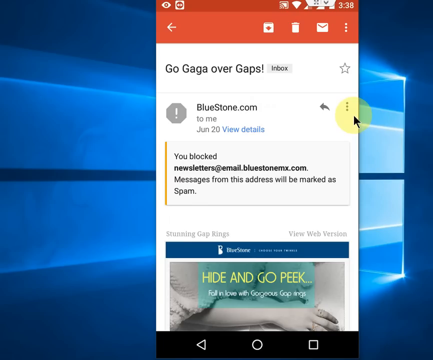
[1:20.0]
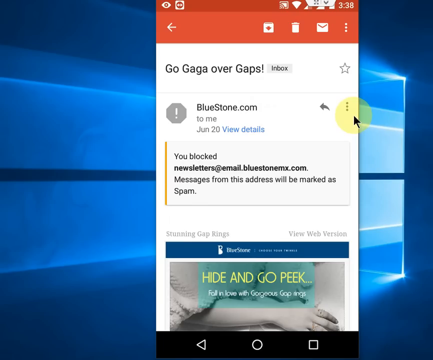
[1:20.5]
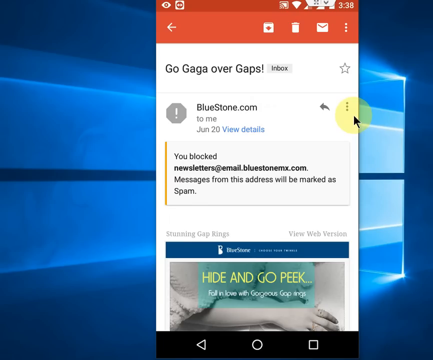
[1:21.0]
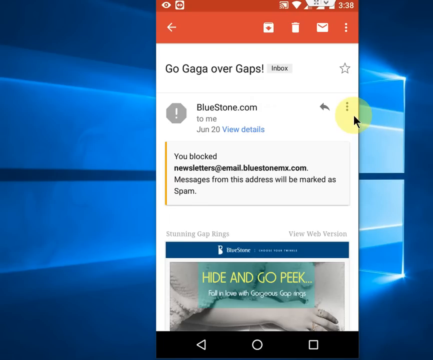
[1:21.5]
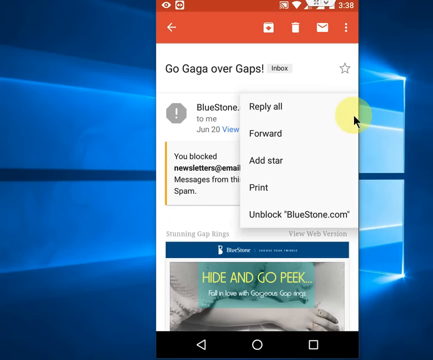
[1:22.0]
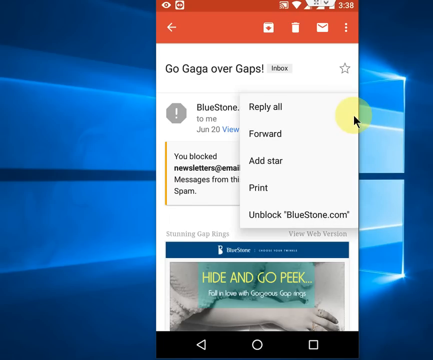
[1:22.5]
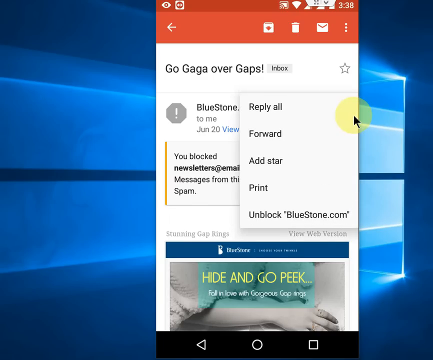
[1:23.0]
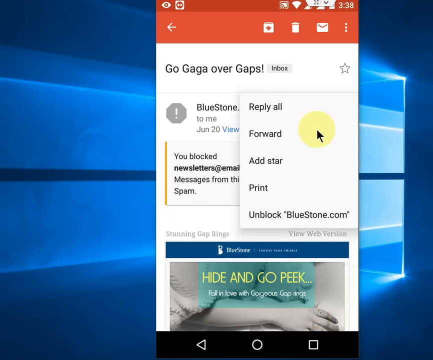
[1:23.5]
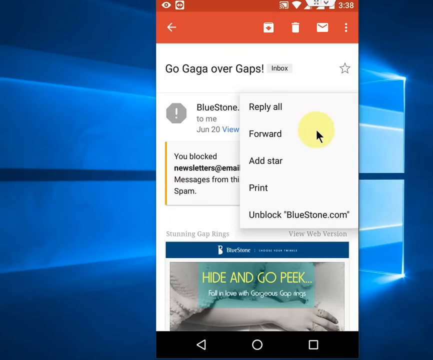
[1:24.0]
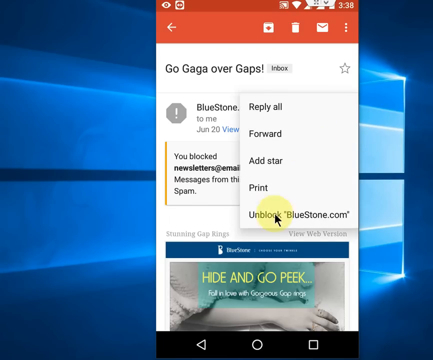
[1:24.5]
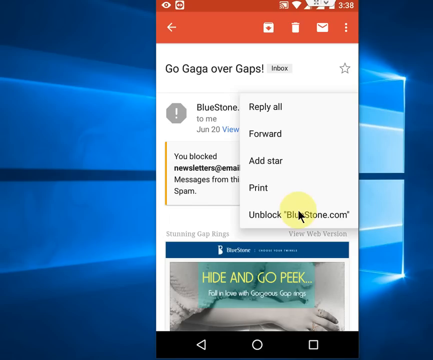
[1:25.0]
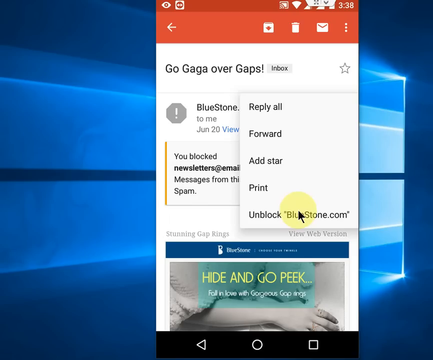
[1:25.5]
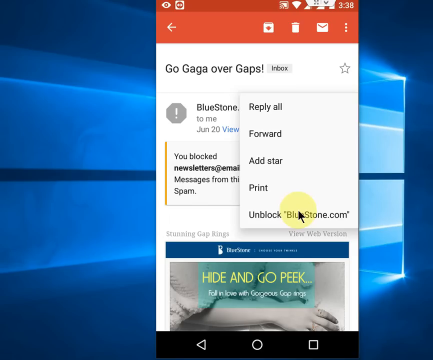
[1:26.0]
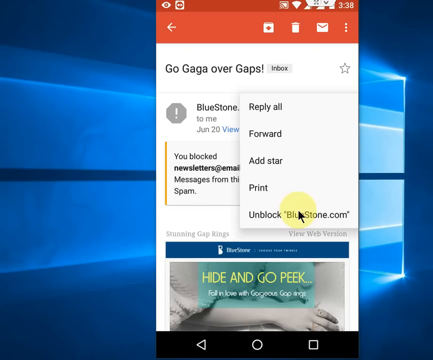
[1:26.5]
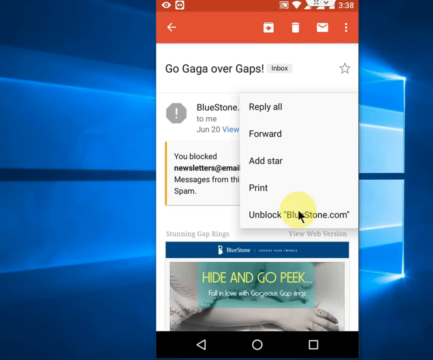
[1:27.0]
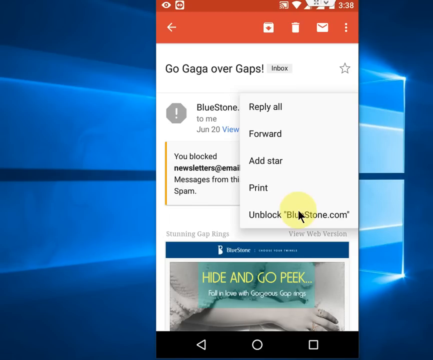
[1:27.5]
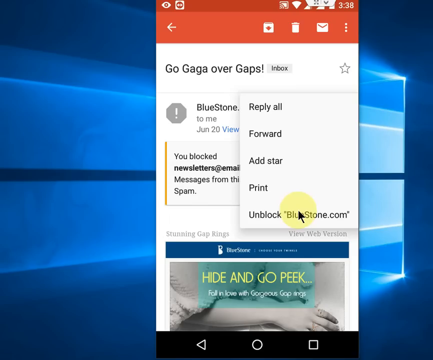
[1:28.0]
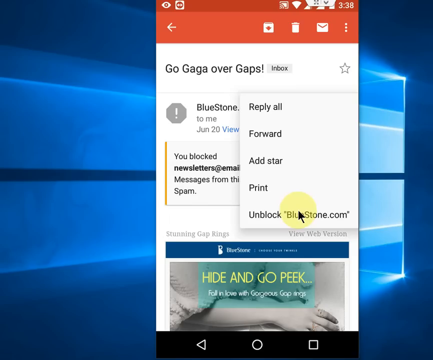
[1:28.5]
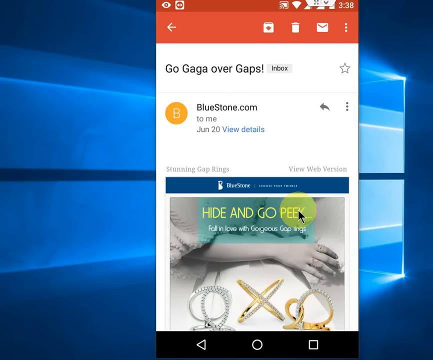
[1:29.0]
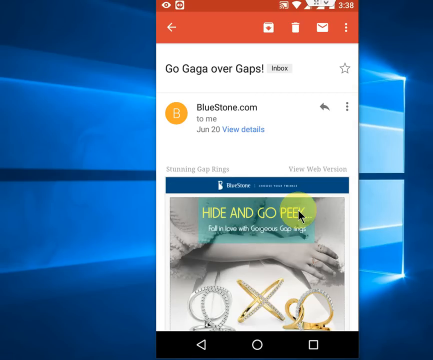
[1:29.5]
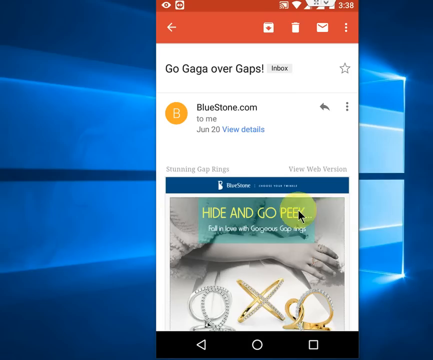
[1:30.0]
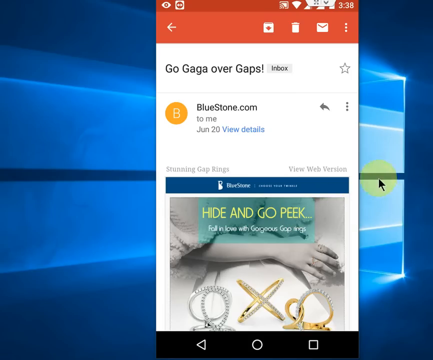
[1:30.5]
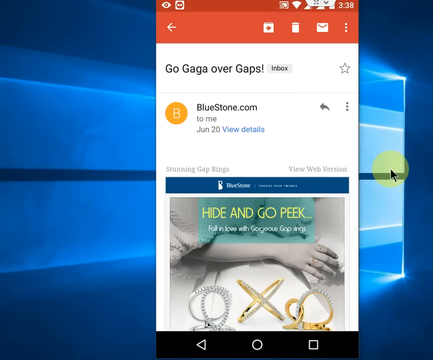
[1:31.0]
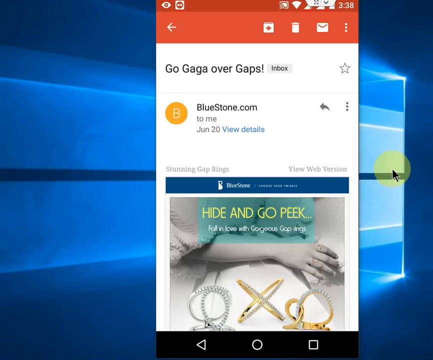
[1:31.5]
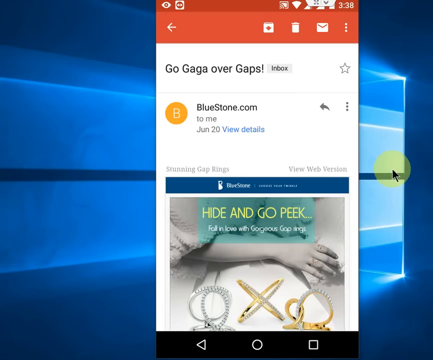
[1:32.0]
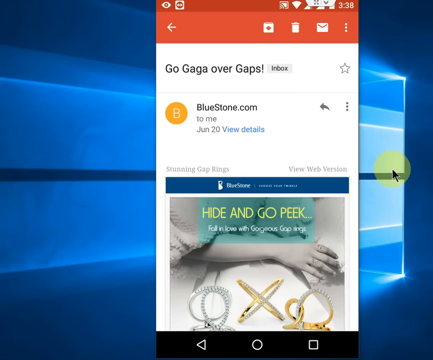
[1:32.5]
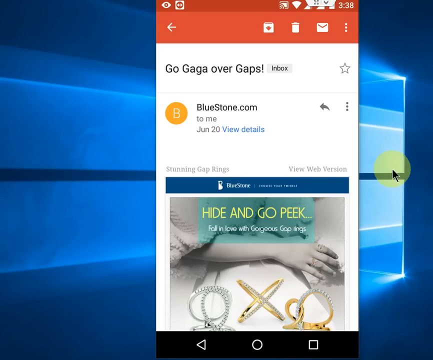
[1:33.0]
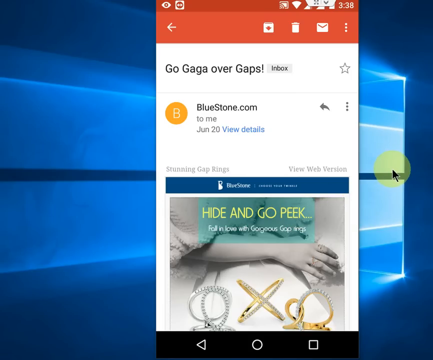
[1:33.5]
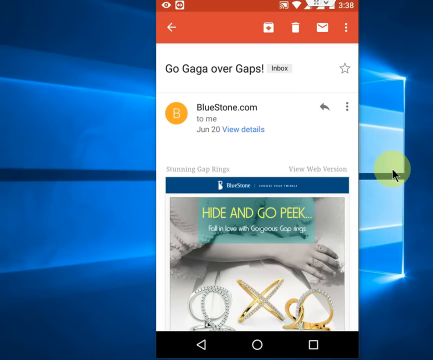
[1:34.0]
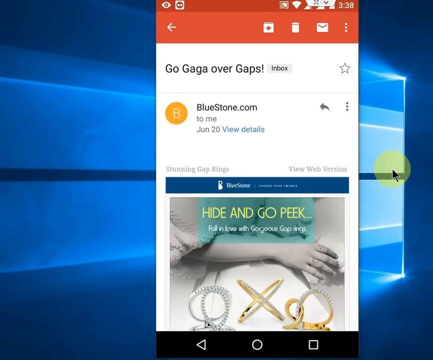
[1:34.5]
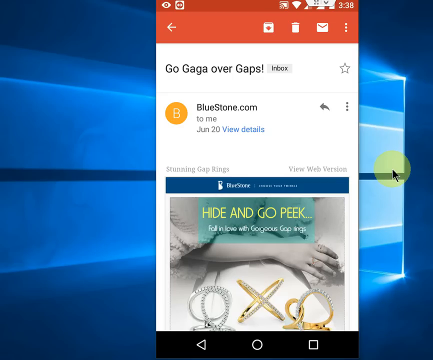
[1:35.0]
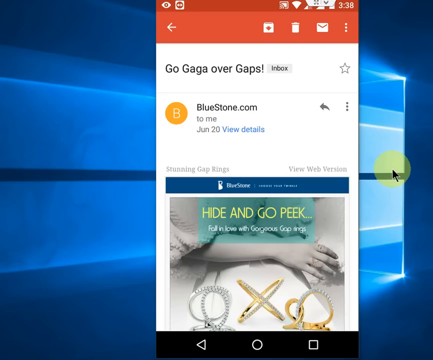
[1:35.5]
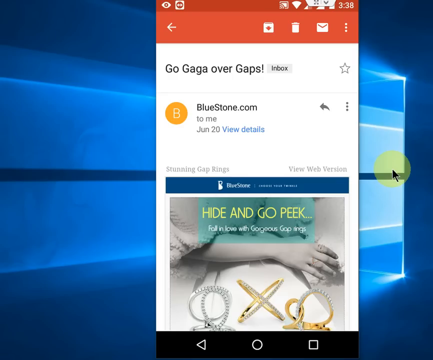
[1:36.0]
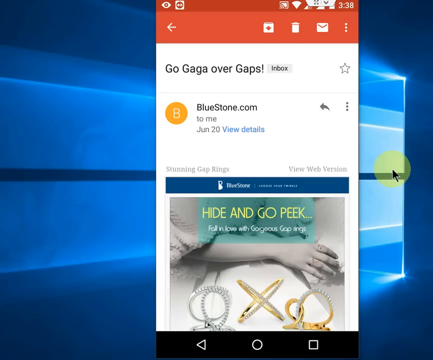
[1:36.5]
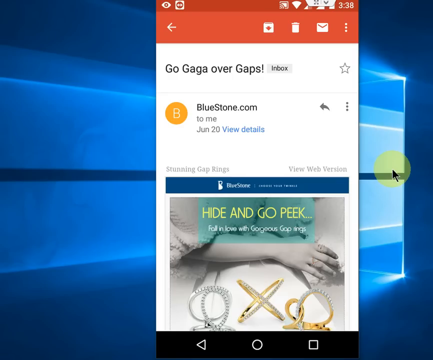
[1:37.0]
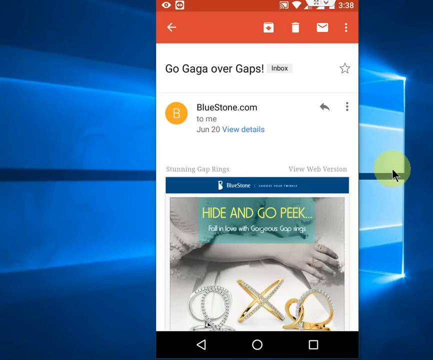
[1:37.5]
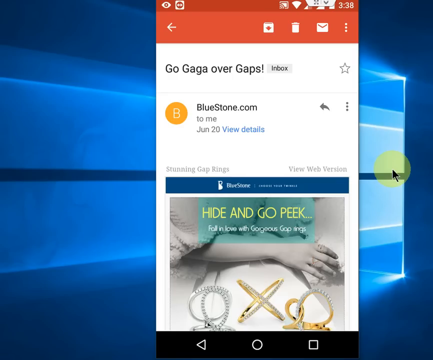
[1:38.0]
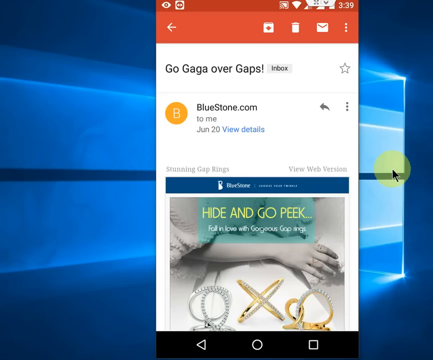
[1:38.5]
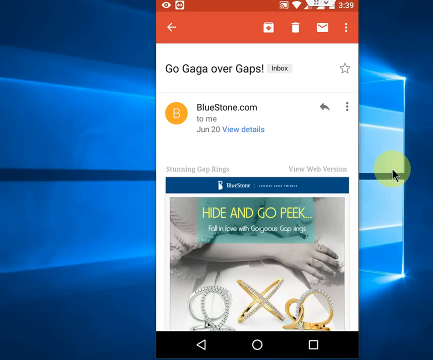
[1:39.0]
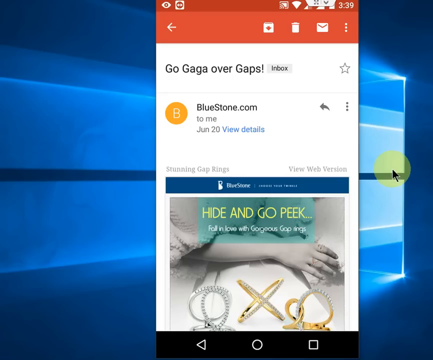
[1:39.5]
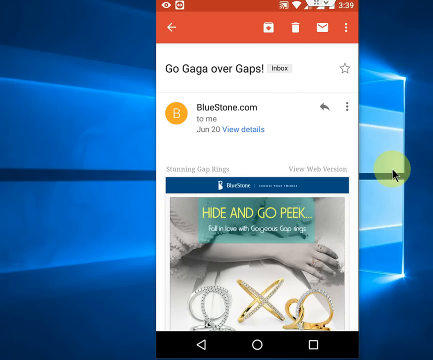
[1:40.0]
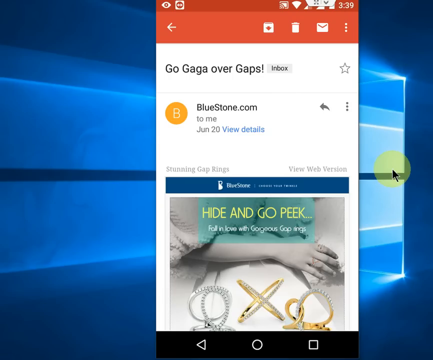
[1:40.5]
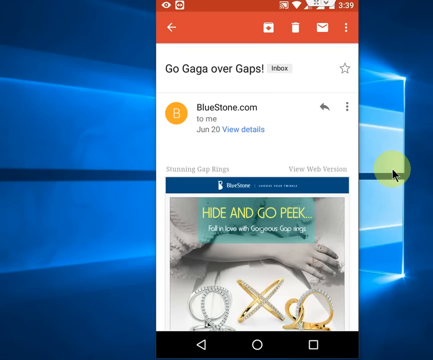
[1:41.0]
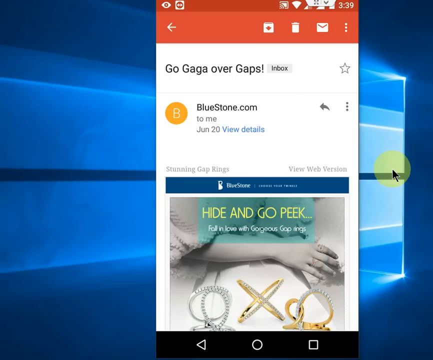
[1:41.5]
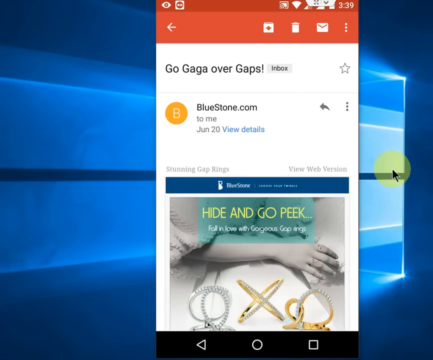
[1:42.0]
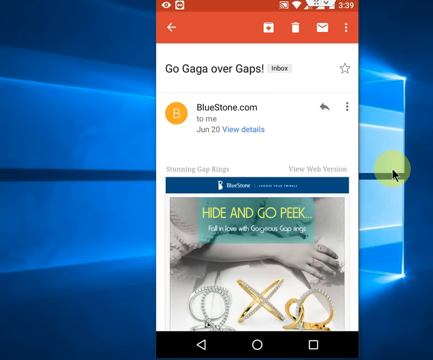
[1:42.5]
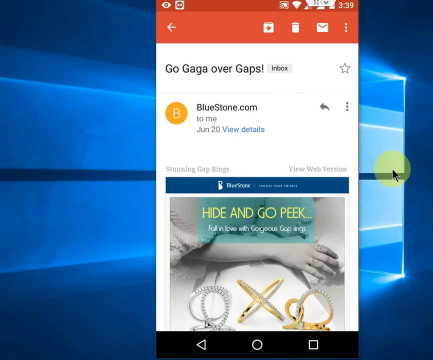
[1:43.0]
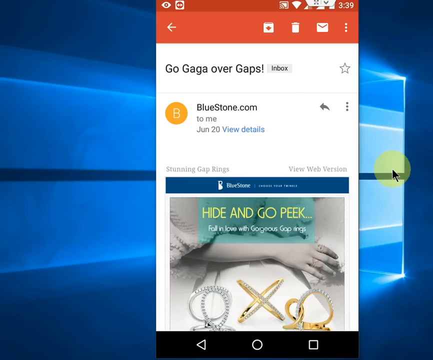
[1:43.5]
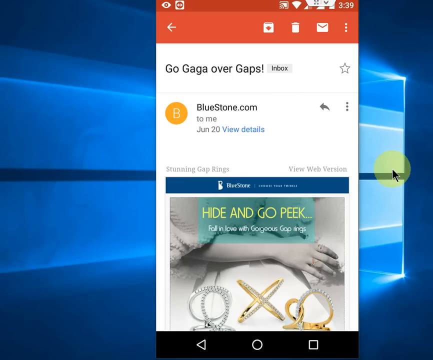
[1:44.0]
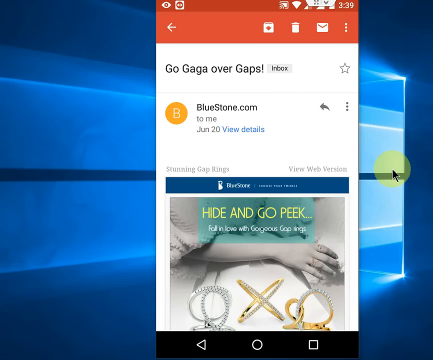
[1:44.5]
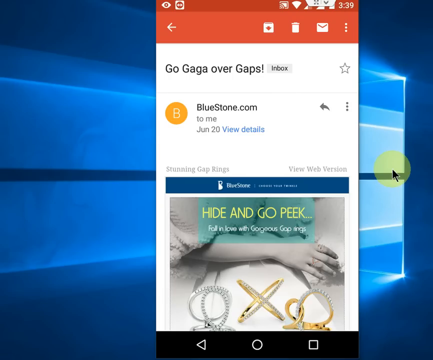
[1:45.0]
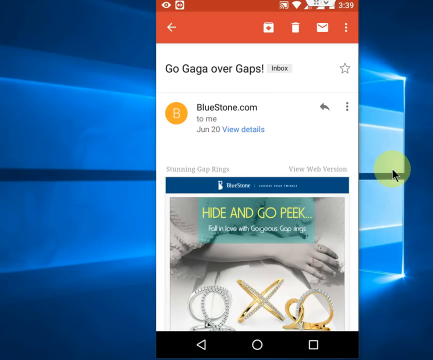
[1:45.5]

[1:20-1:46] The same "go gaga for gaps" email from bluestone.com is shown, which has just been blocked. At the bottom is "Hide and Go Peek" in yellow text inside a green rectangle, with "fall in love with the gorgeous gap rings" written in white. The user moves the yellow circle cursor, and the options now are "reply all", "forward", "add star", "print" and "unblocked bluestone.com". The cursor goes down to "unblocked bluestone.com" and clicks it. The video apparently demonstrates how to block and then unblock the sender.